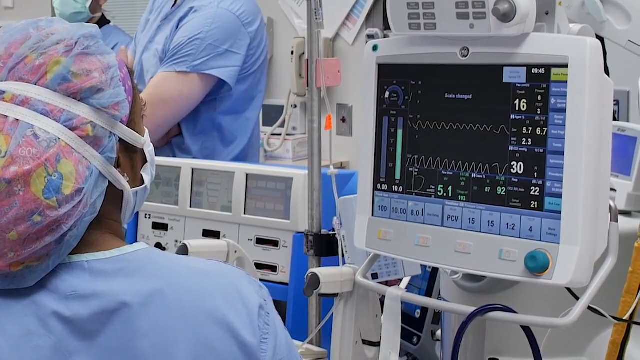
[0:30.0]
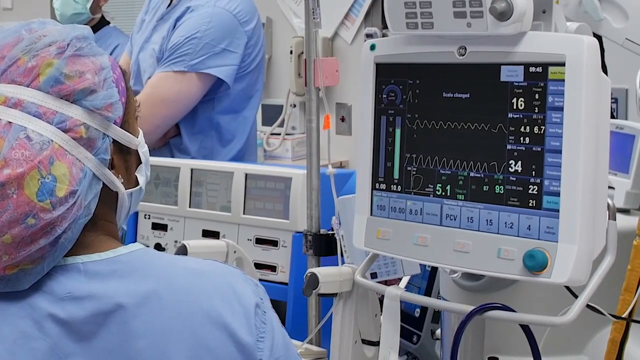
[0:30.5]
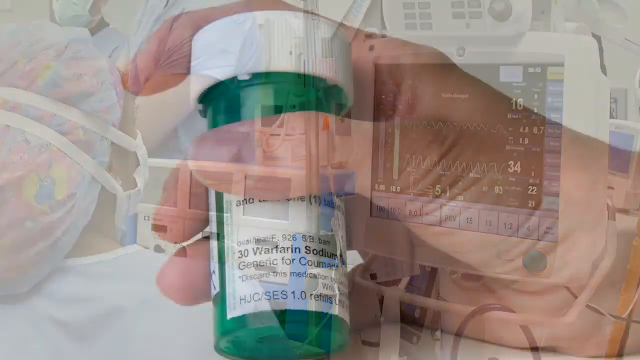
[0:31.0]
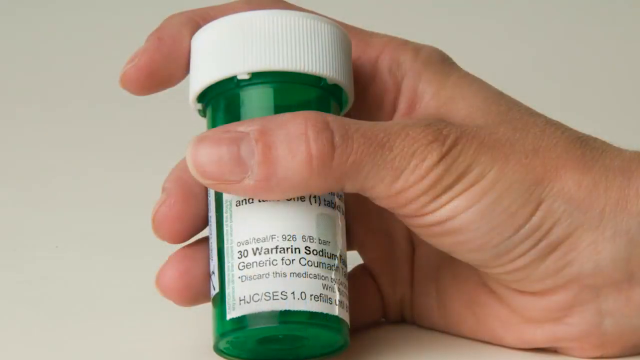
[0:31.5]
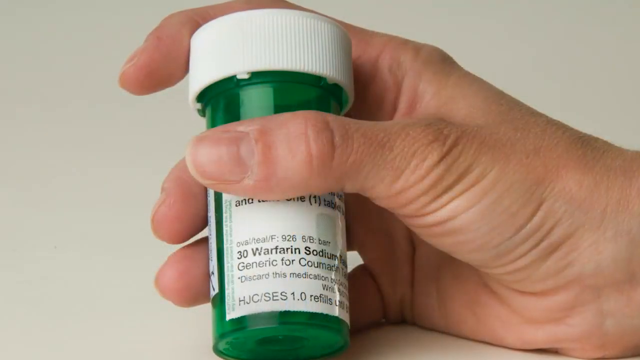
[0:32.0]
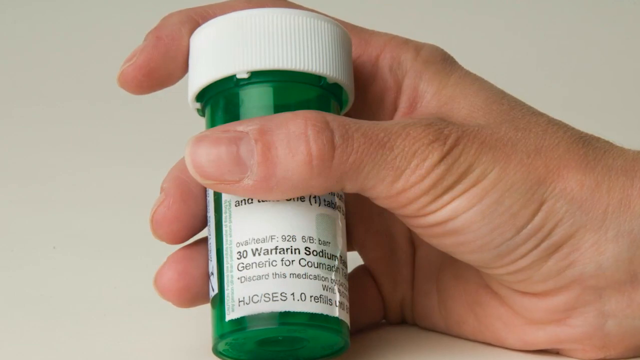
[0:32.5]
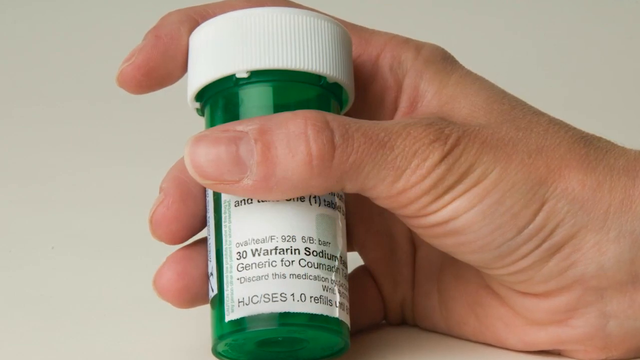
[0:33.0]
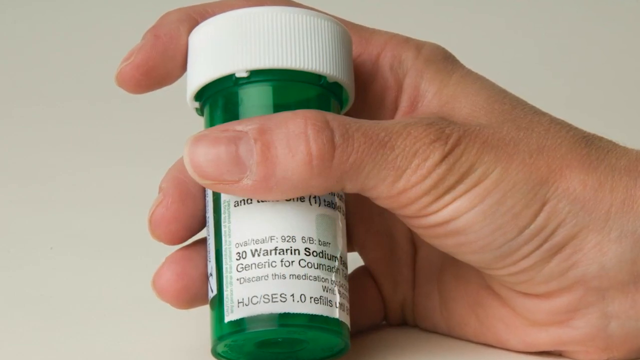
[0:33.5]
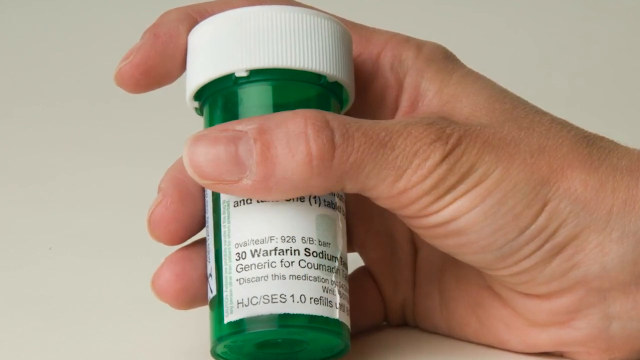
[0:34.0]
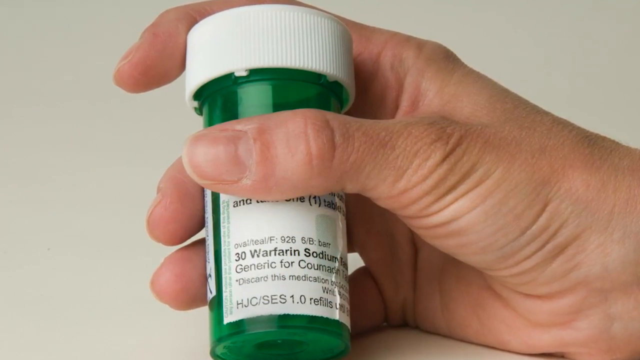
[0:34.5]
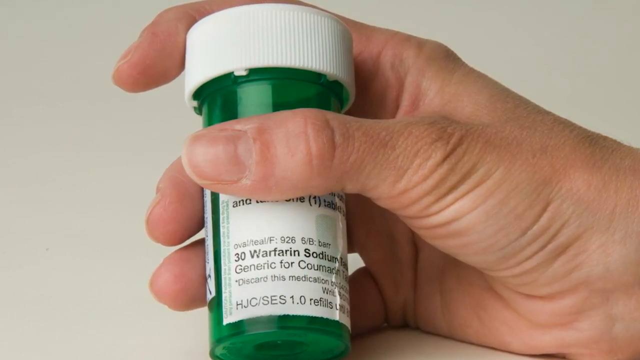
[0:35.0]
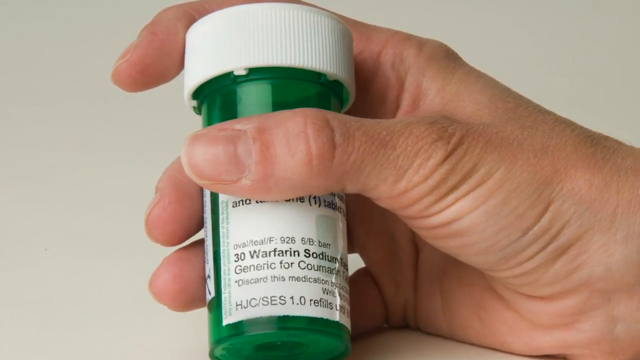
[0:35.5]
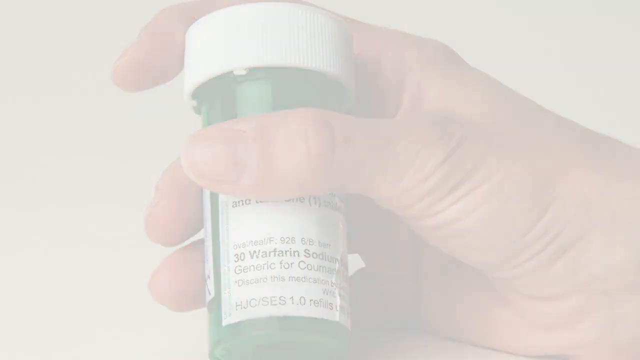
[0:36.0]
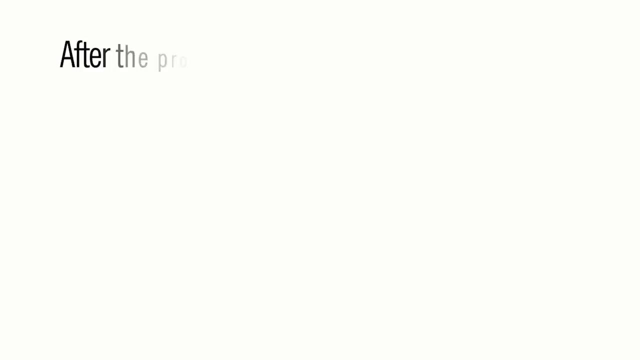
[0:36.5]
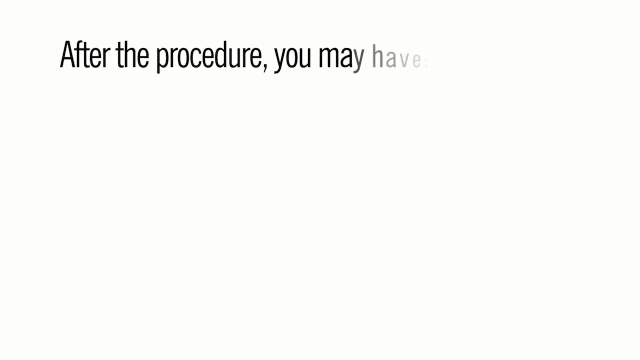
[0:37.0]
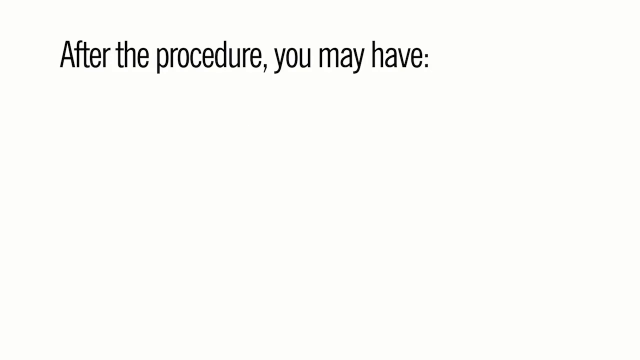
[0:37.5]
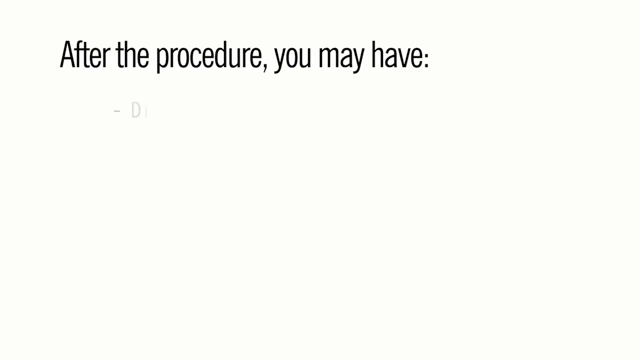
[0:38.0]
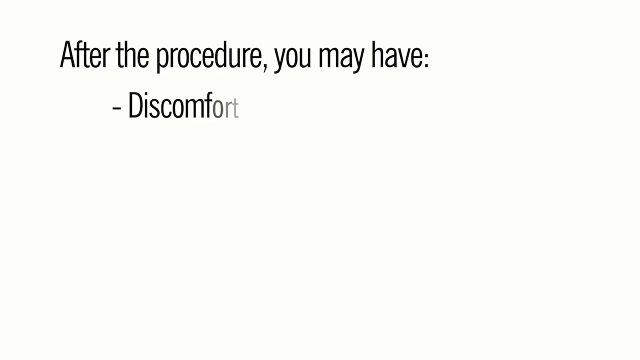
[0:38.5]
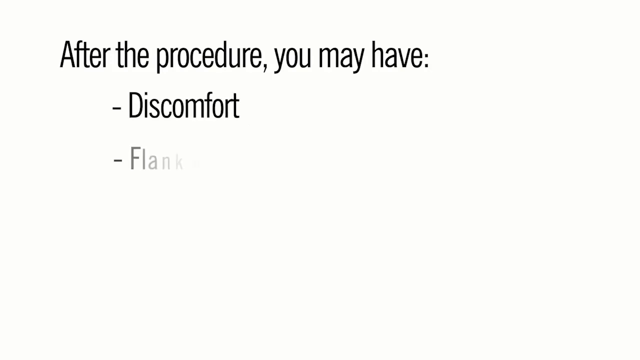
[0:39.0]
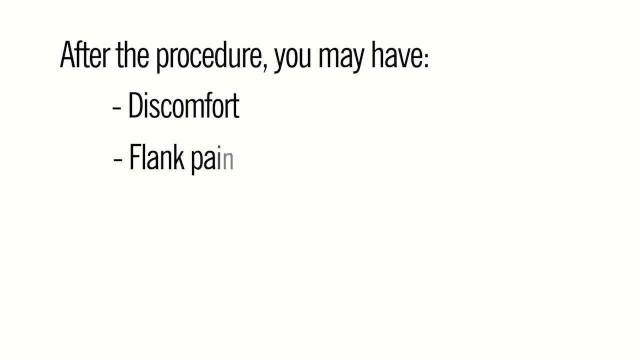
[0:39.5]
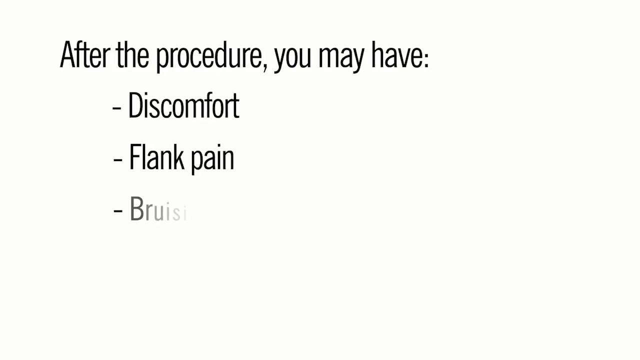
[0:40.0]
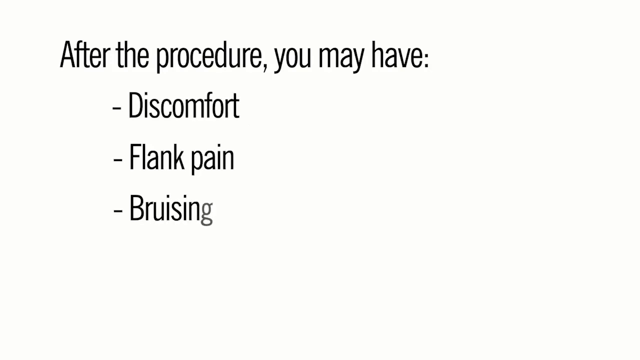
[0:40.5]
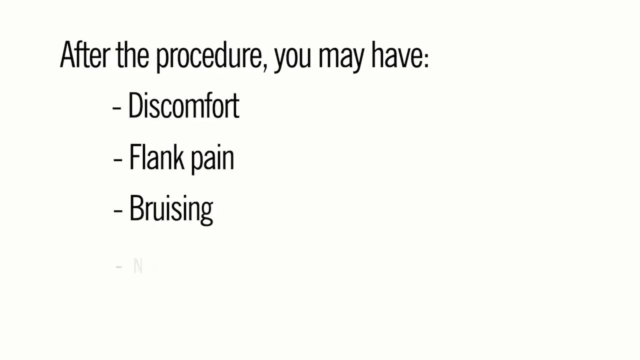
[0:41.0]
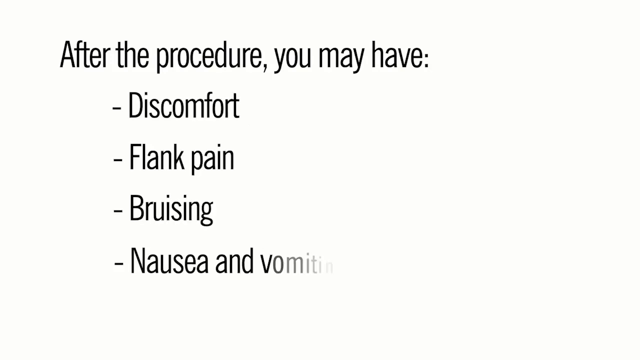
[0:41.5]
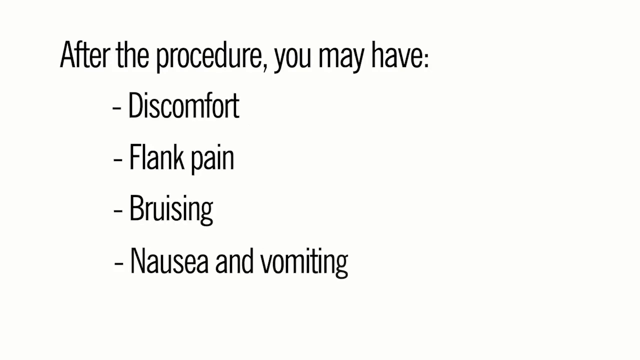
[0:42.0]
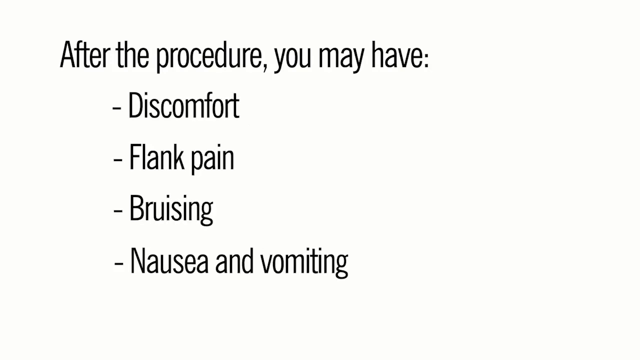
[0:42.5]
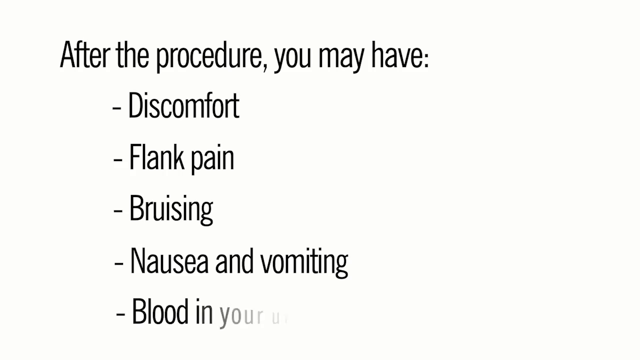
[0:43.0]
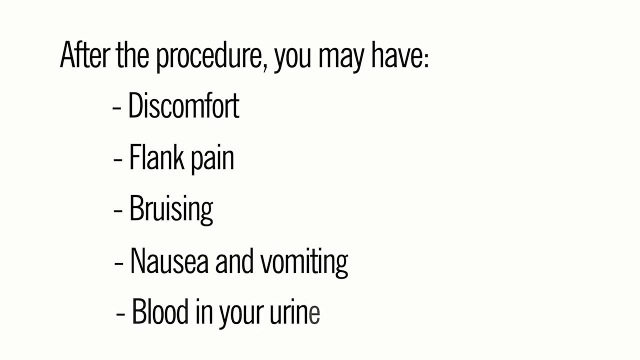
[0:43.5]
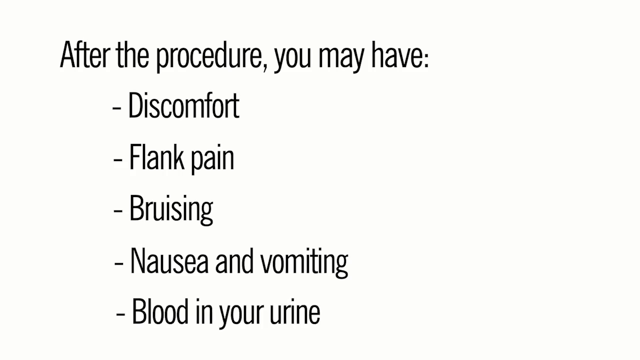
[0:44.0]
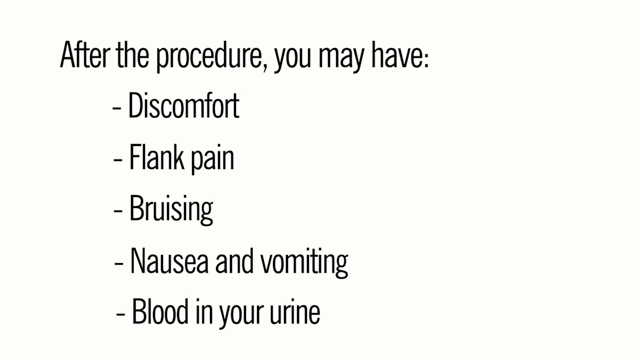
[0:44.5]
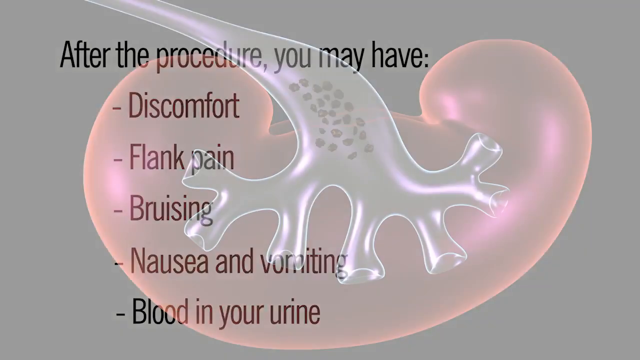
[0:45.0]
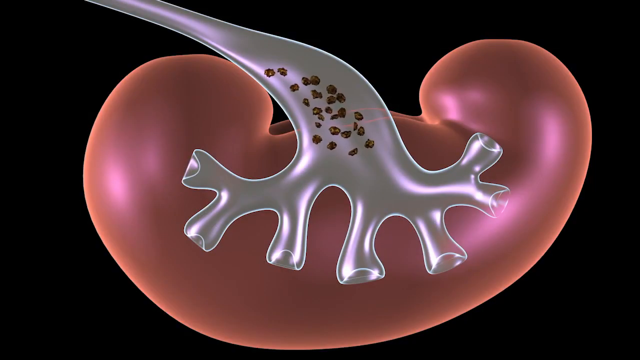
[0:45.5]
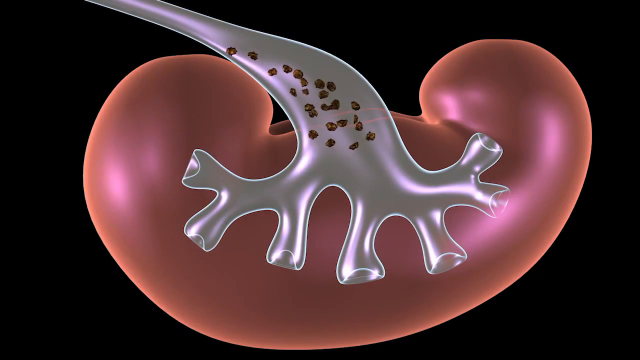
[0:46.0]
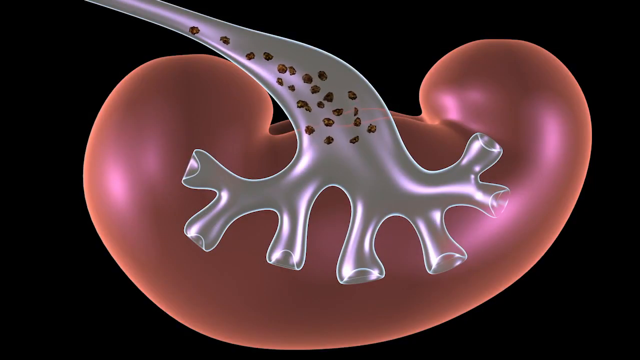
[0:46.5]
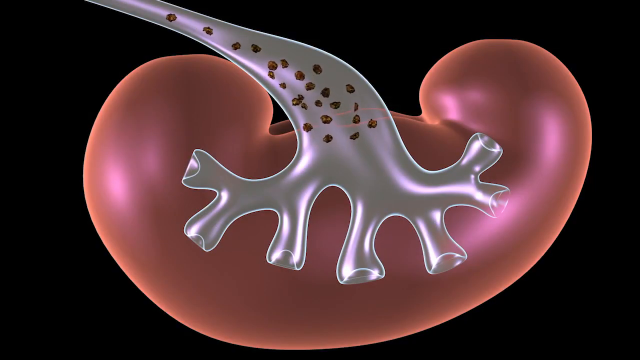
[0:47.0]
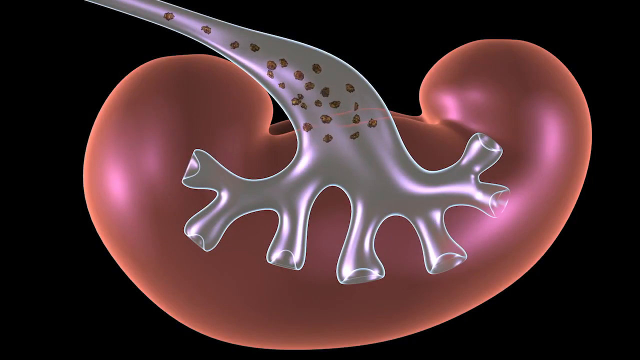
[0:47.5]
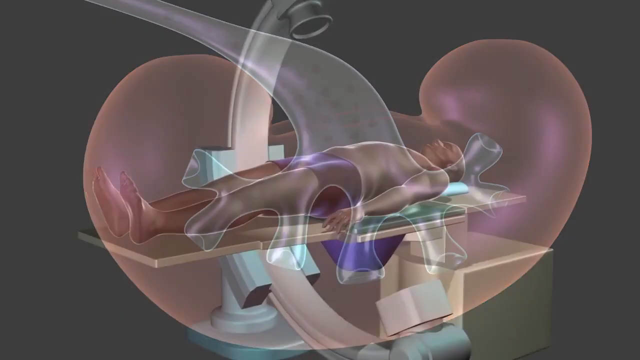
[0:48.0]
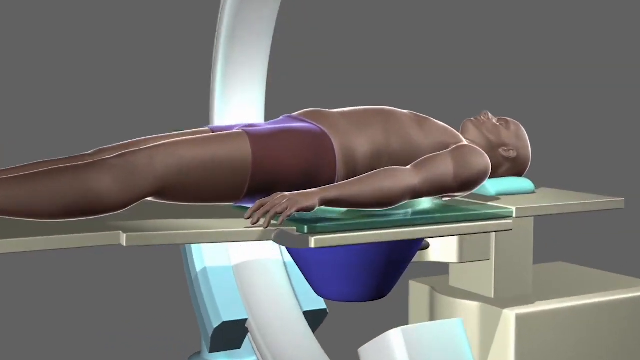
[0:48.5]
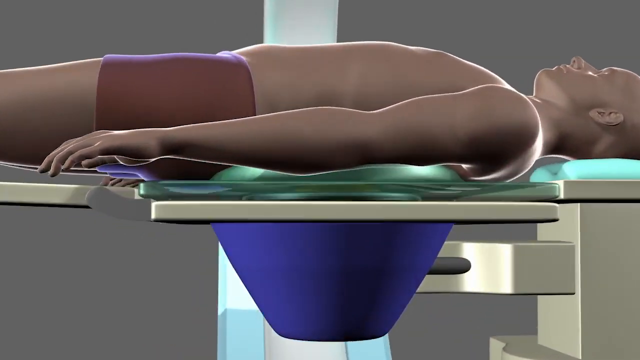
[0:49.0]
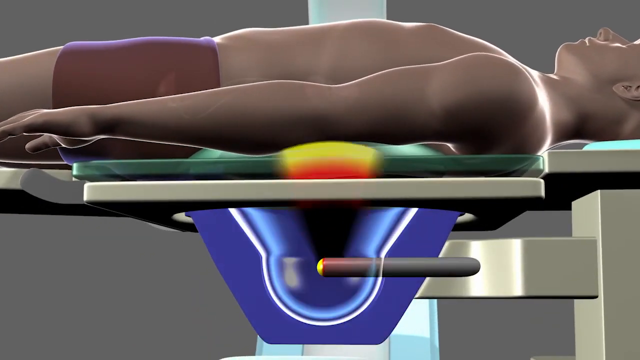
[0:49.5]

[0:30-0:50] An interior hospital room contains various machines, one of which shows the patient's vitals. A Caucasian hand holds a green pill bottle with a white cap, its thumb over the patient's name and private information. The label shows the medication is 30 warfarin sodium tablets, generic for another drug whose name is illegible. The screen changes to a light background with black script reading "after the procedure, you may have discomfort, flank pain, bruising, nausea, and vomiting, and blood in your urine." Then an anatomical picture of the kidney returns, with branches going inside it, and the stones move down a passageway, down a tube, and out of the kidney.